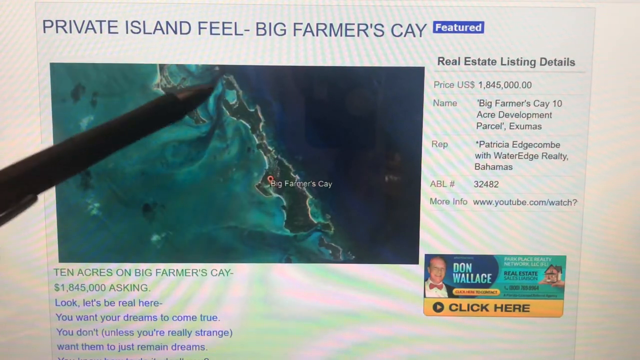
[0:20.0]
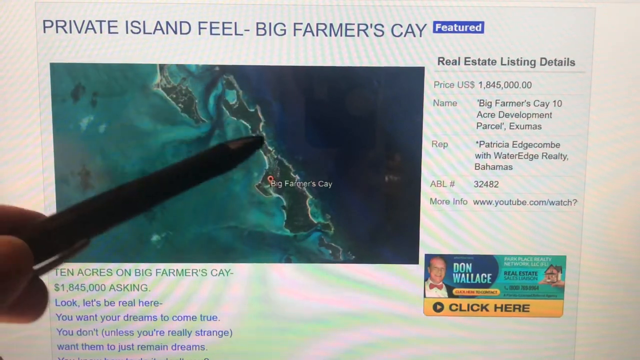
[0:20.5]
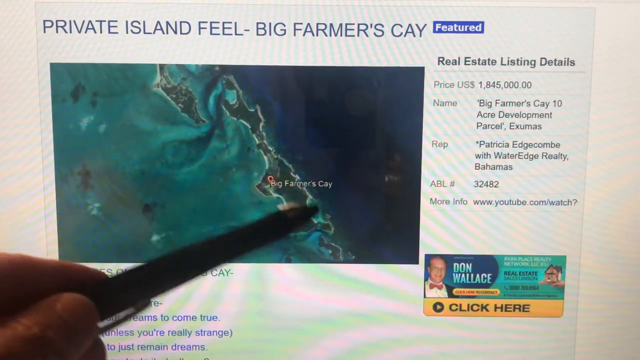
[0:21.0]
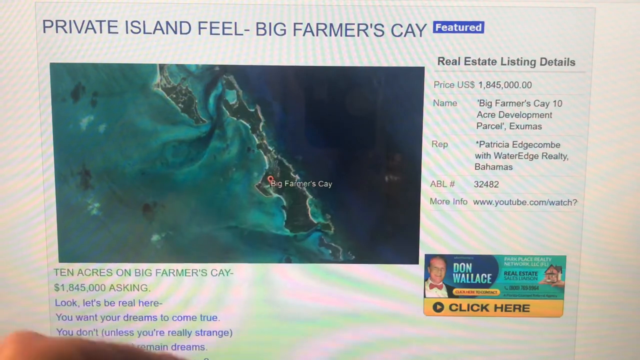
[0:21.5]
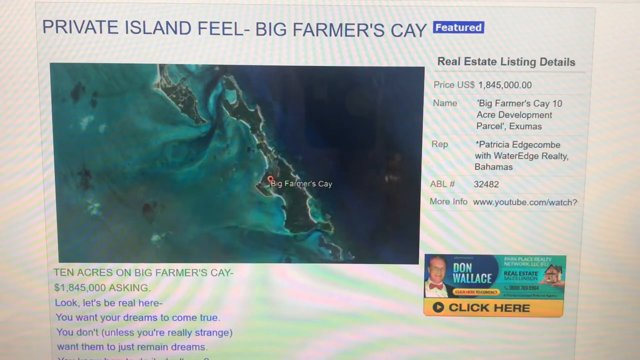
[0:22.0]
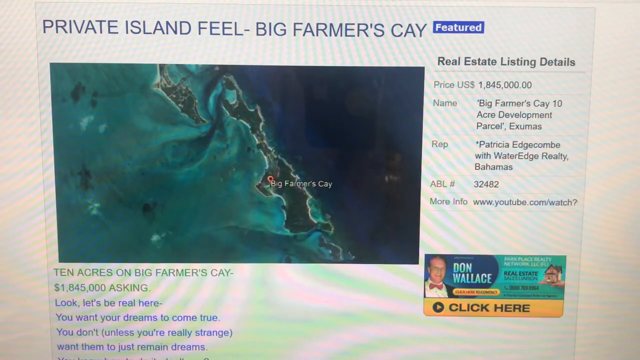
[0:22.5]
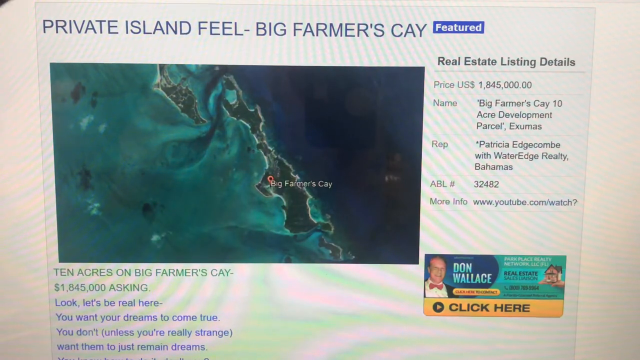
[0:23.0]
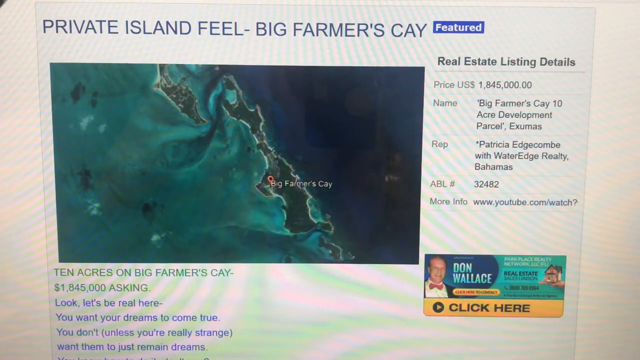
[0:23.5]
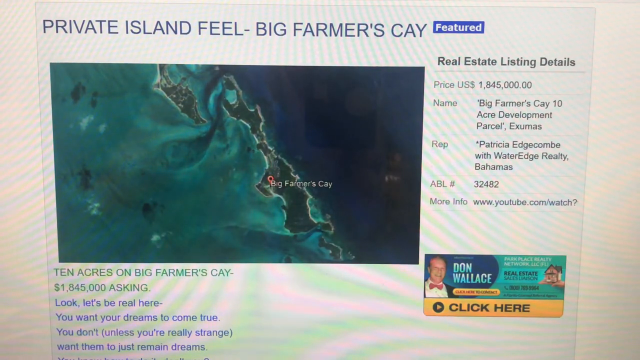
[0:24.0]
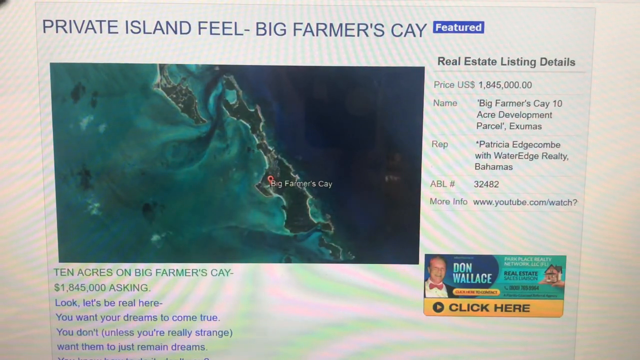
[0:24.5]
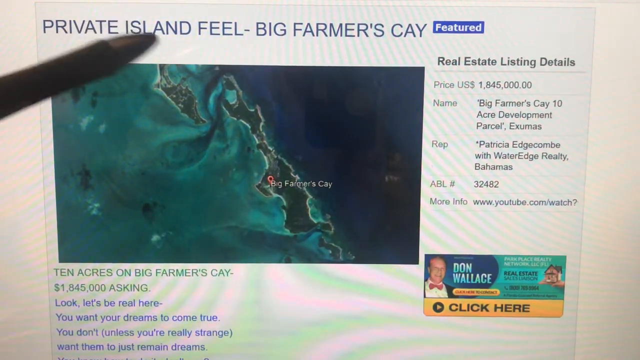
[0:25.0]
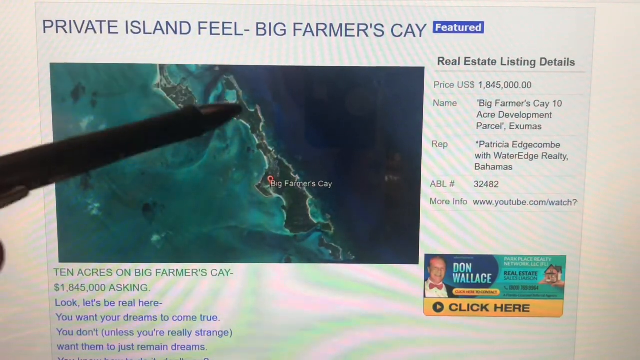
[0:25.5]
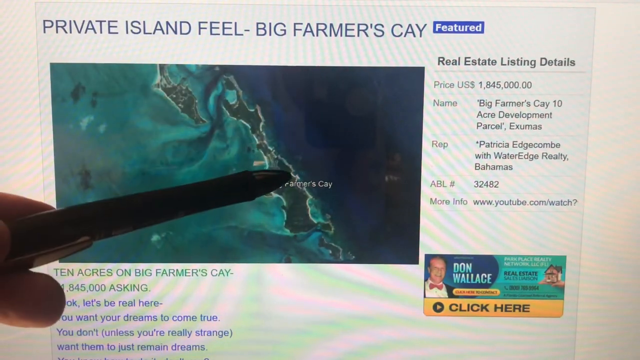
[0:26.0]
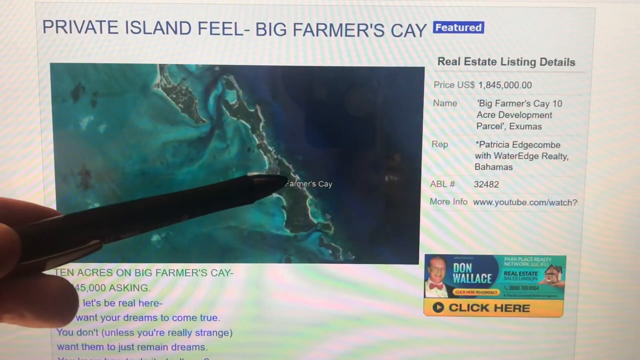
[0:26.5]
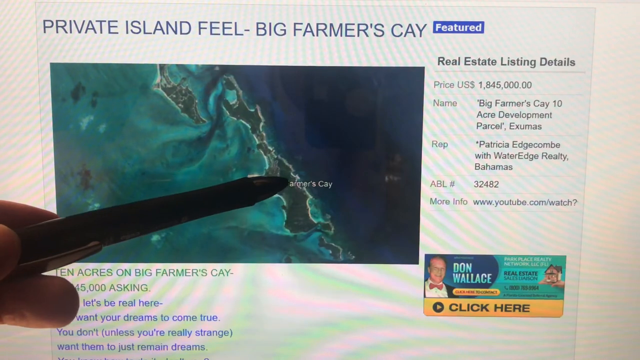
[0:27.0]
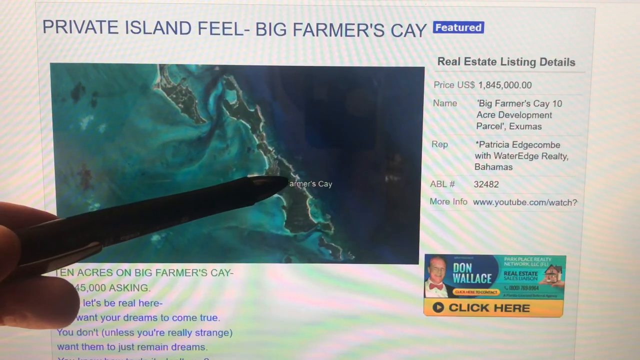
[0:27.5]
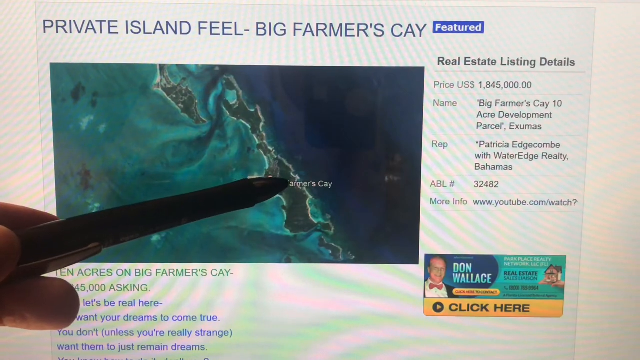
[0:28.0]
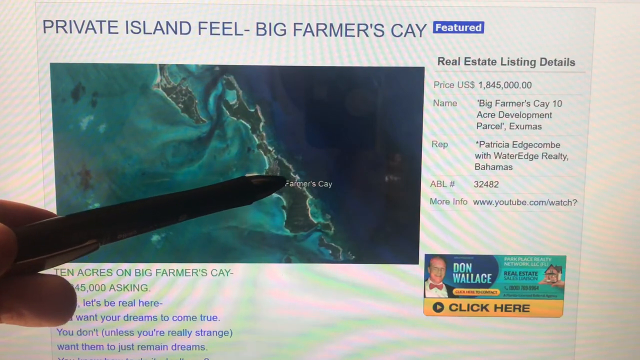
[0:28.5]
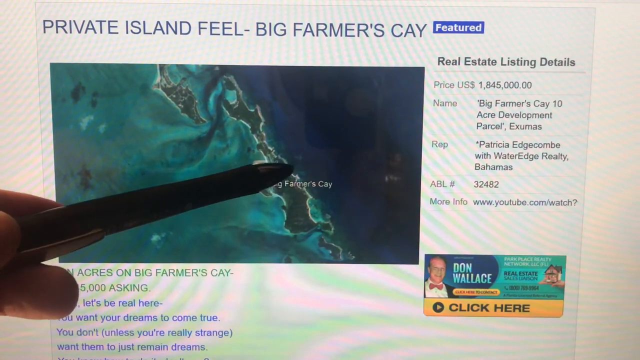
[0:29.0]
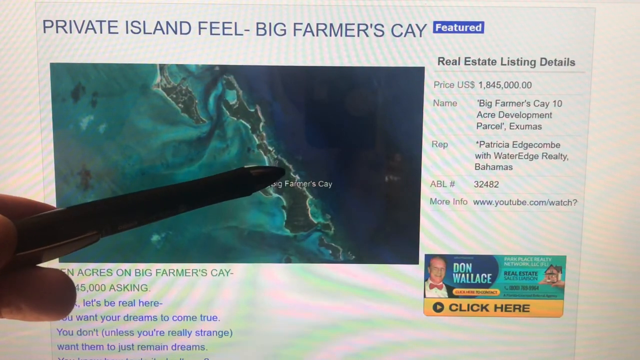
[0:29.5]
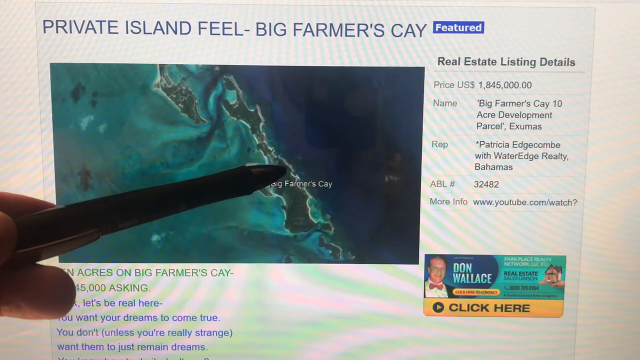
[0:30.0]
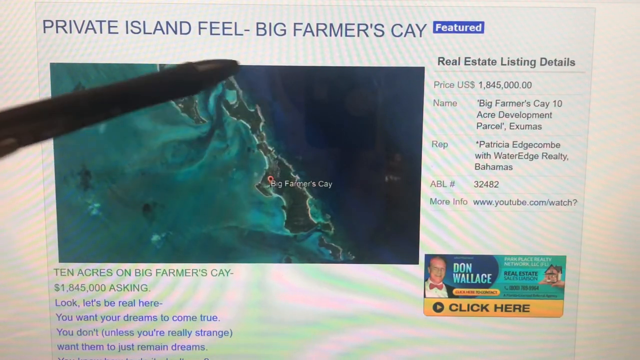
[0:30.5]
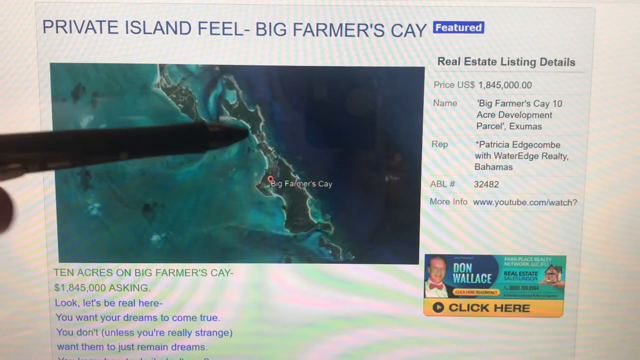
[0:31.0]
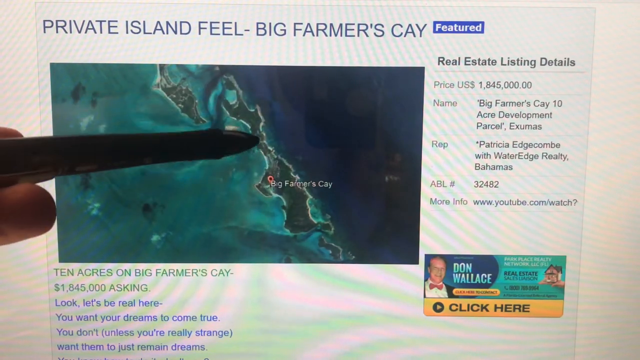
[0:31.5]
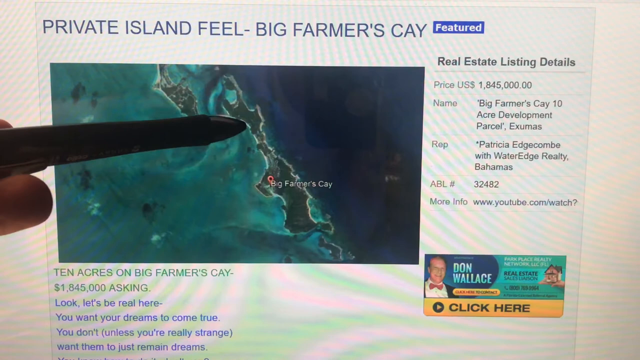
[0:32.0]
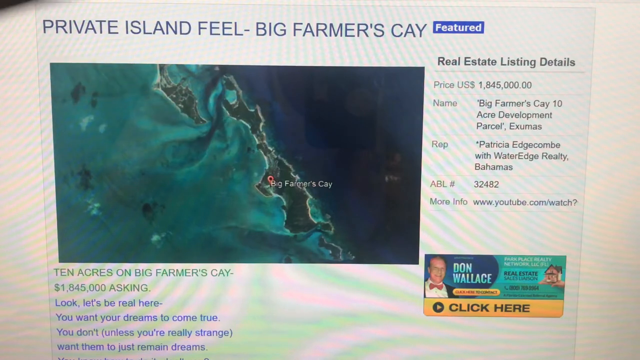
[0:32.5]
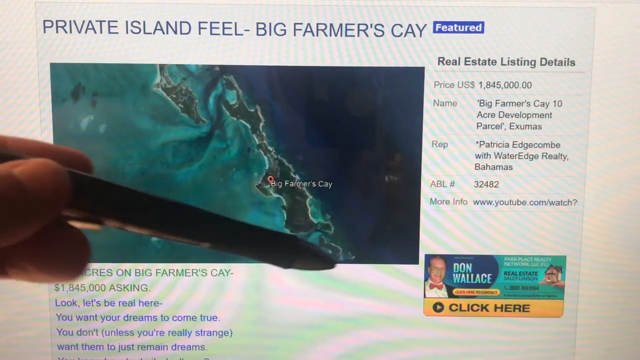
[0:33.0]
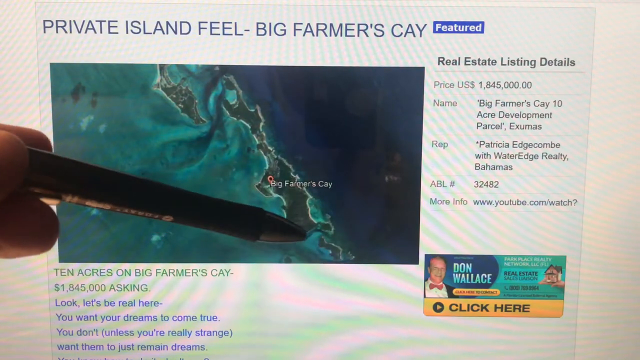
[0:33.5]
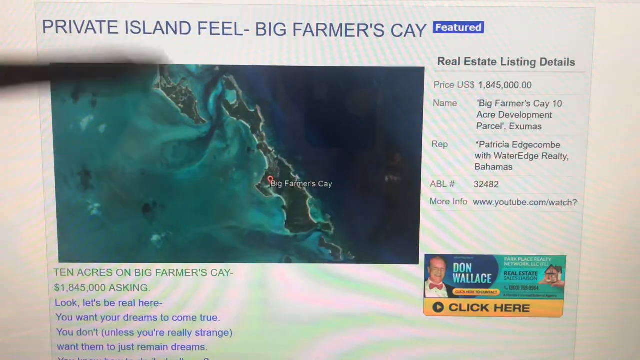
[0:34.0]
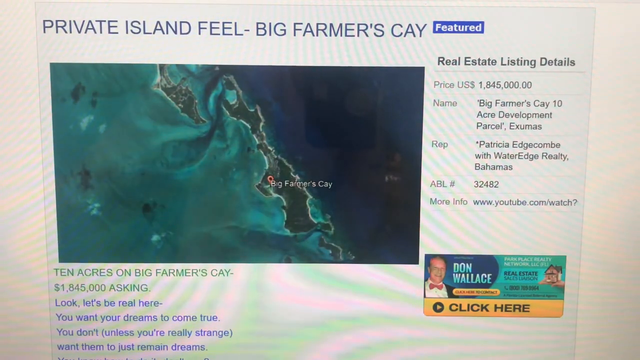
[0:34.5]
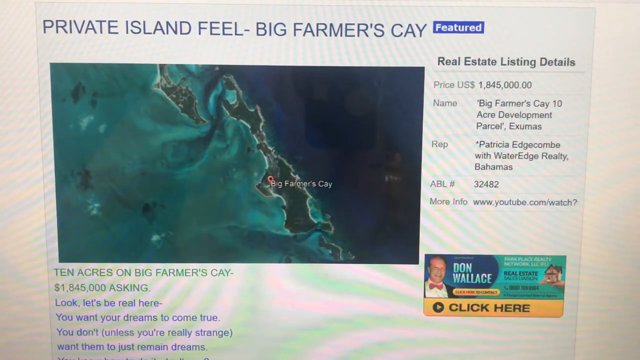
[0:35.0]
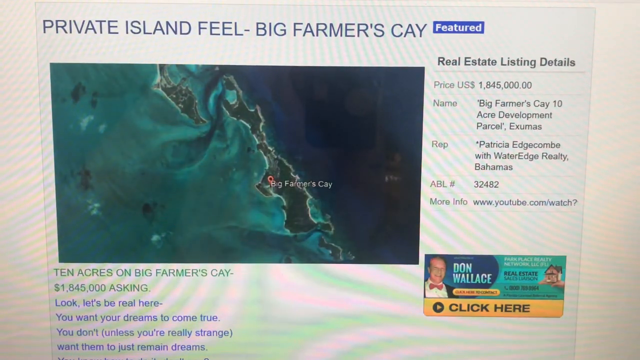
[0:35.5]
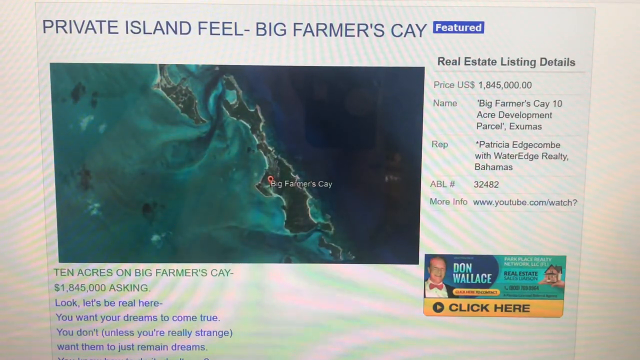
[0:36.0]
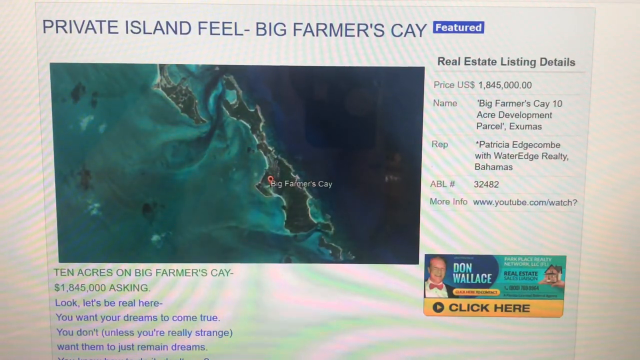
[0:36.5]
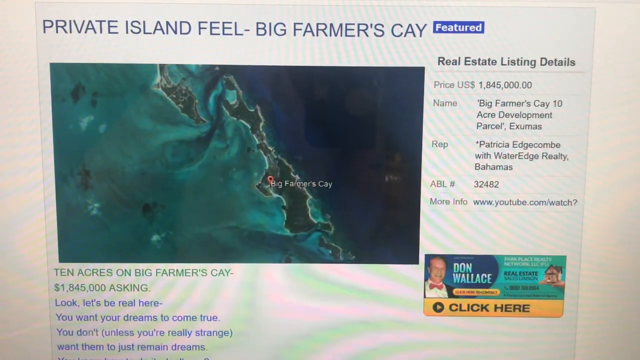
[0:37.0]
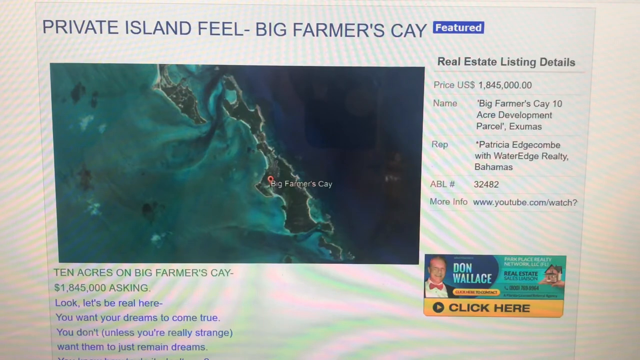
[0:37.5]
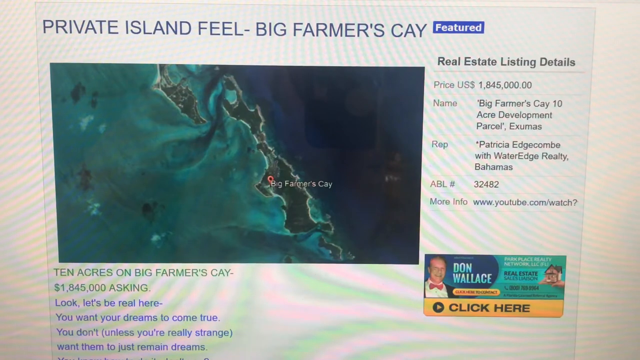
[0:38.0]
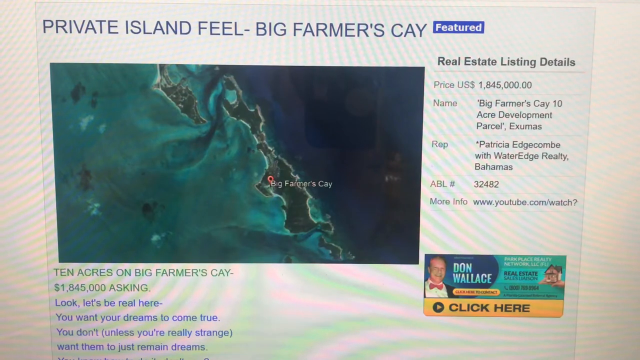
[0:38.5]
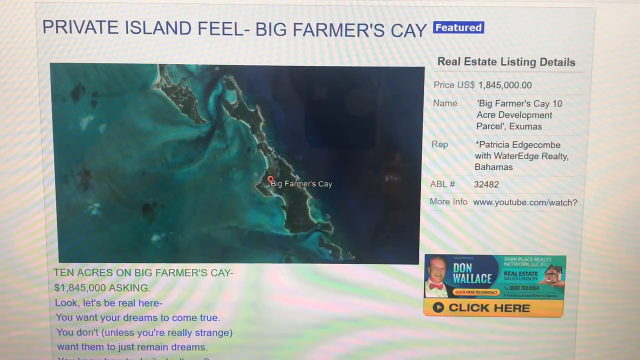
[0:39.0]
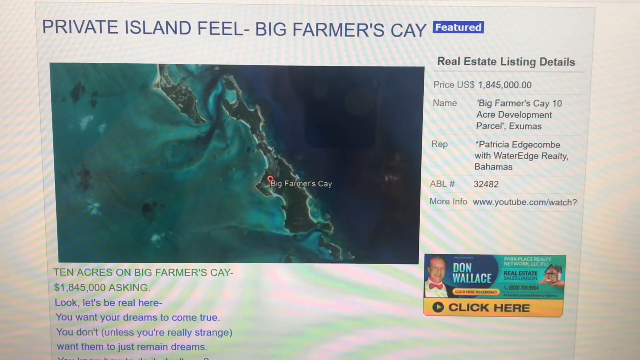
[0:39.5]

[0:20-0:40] On the same site, the pen travels across the island in the photo, indicating its length, following the road from top to bottom toward the south. The person behind the camera moves the pen to different places on the listing, probably showing where there might be places for boats, entrances, spots to land, or places to live, focusing mainly on the picture. On the right of the site are details about the listing and an advertisement, probably for the real estate agent. At the bottom left of the photograph, the area is given as about 10 acres, and there is some quirky text seemingly aimed at reluctant buyers. The photograph appears to be taken from Google Maps.